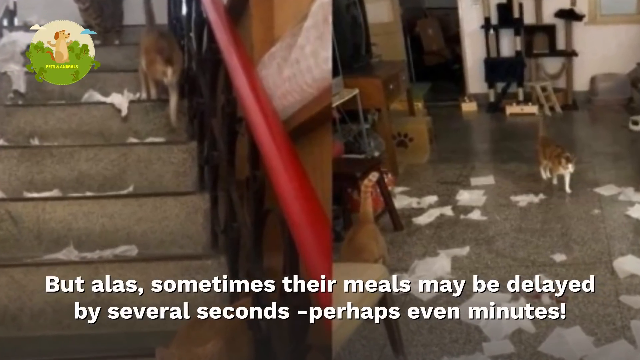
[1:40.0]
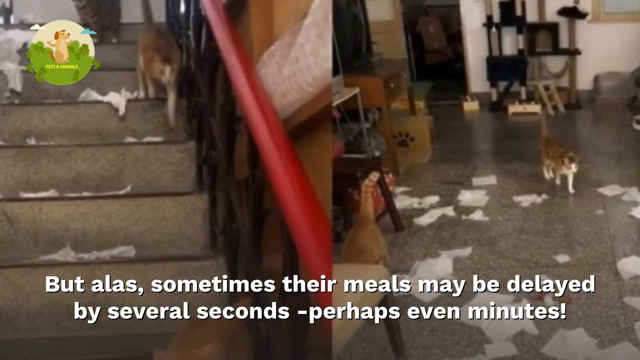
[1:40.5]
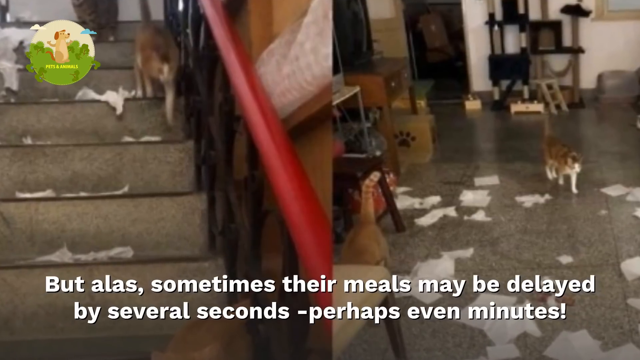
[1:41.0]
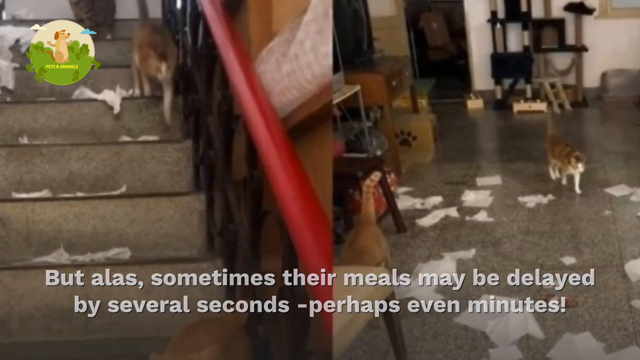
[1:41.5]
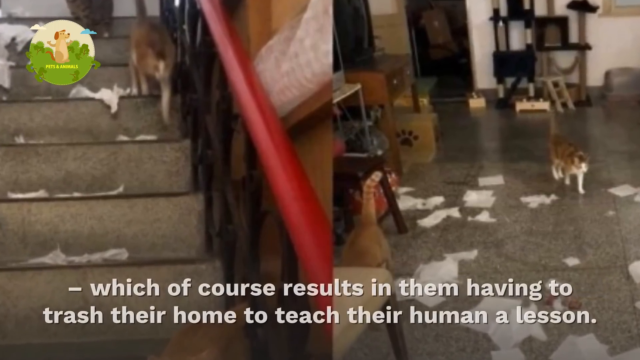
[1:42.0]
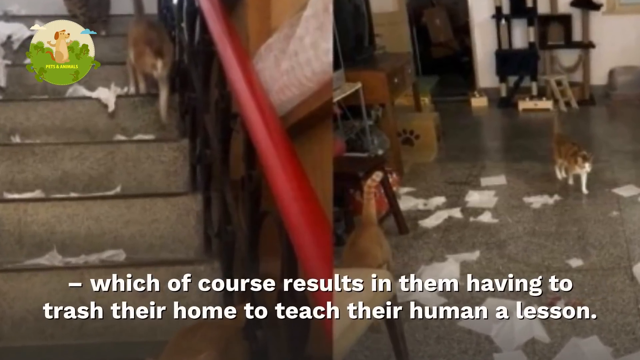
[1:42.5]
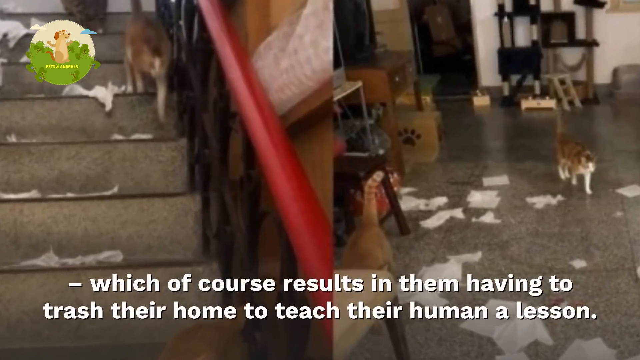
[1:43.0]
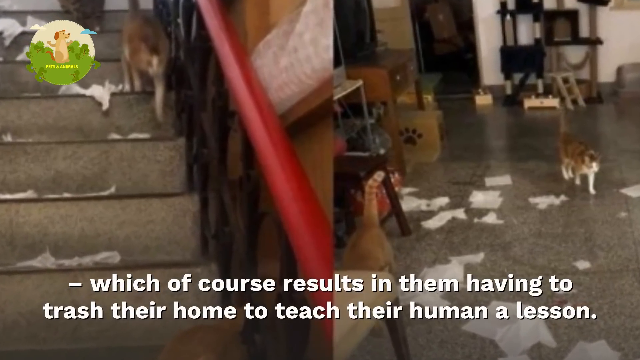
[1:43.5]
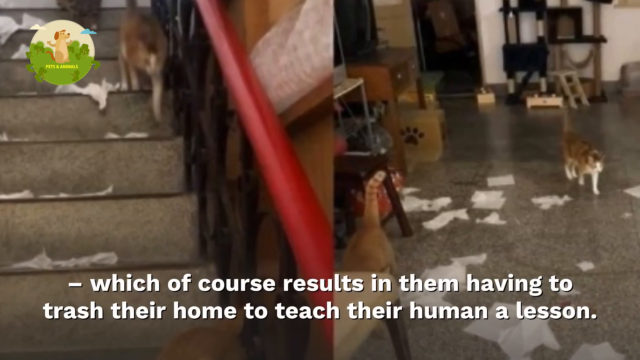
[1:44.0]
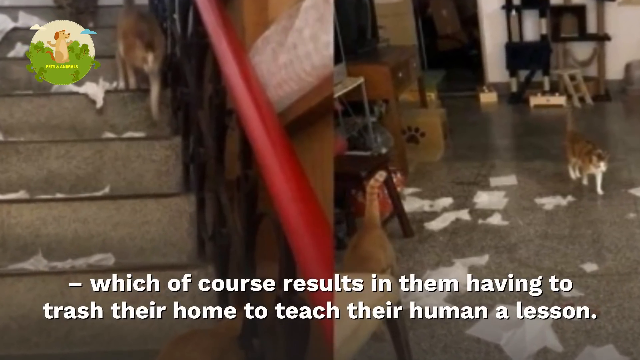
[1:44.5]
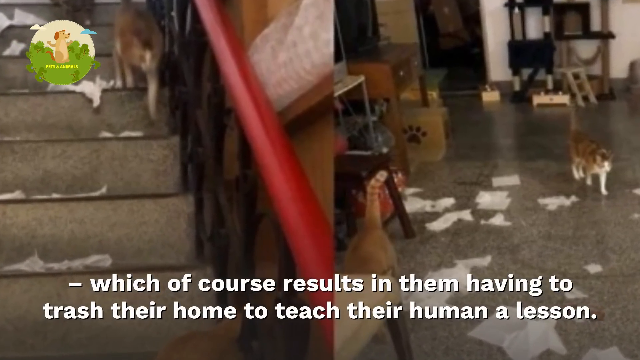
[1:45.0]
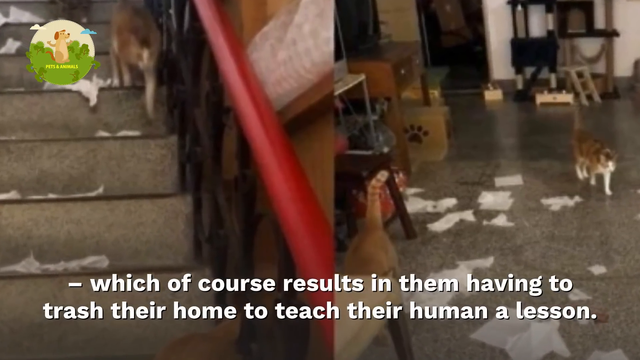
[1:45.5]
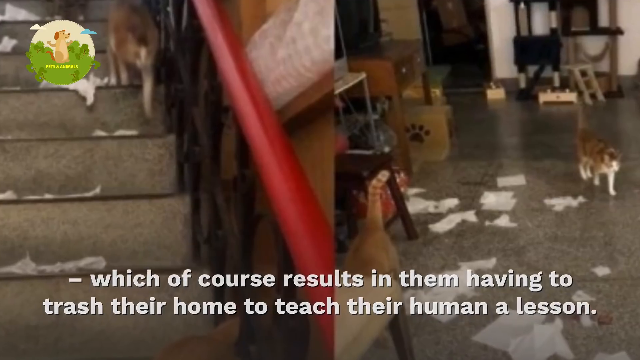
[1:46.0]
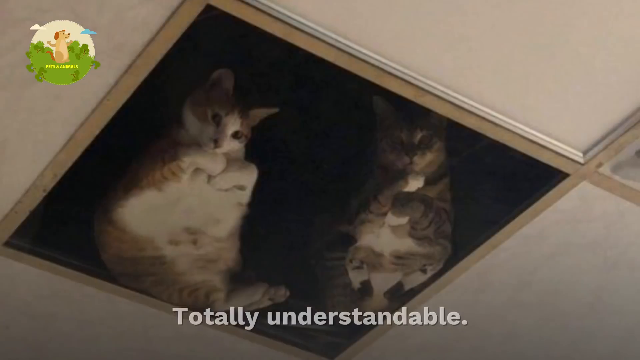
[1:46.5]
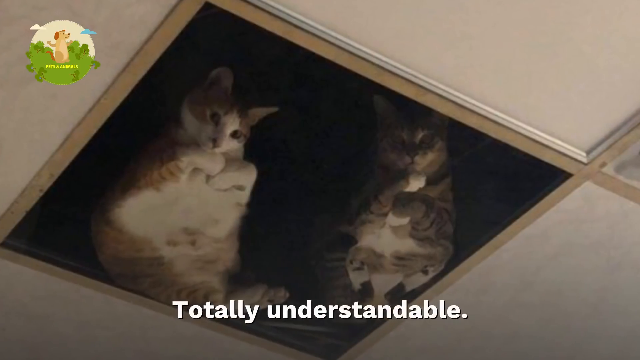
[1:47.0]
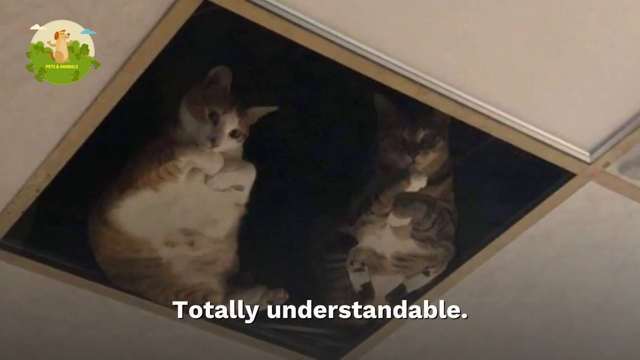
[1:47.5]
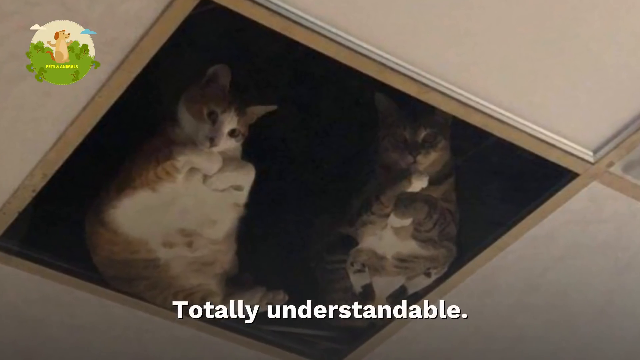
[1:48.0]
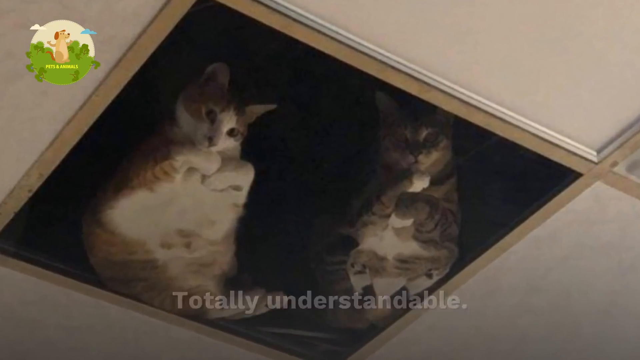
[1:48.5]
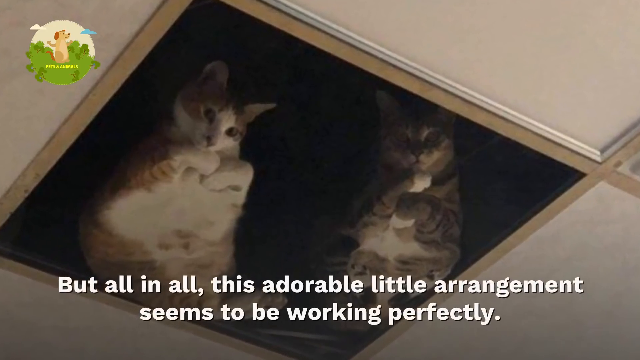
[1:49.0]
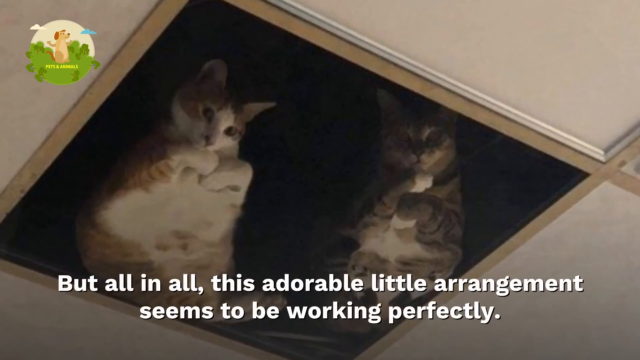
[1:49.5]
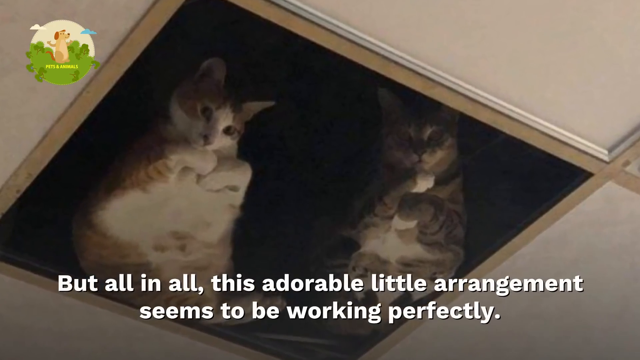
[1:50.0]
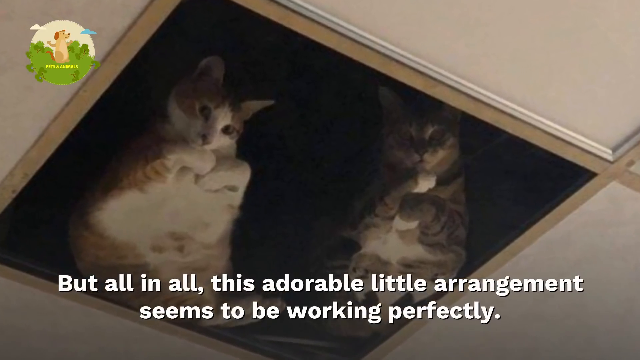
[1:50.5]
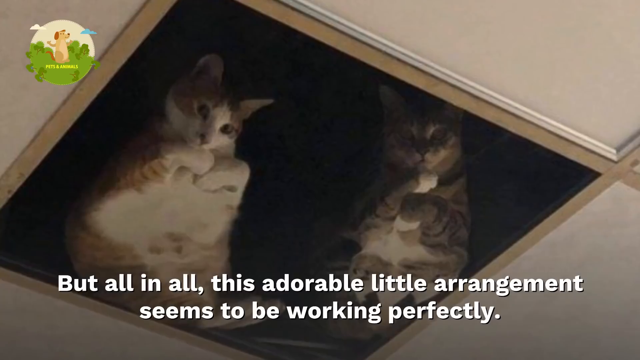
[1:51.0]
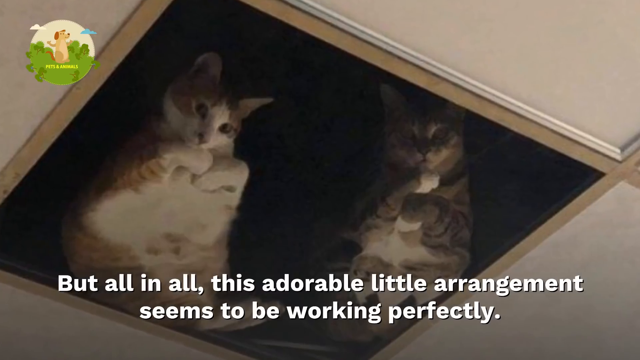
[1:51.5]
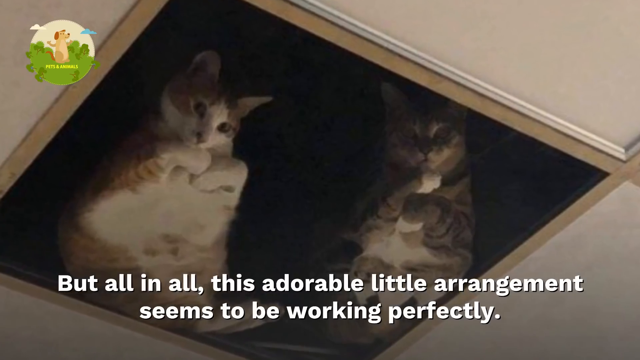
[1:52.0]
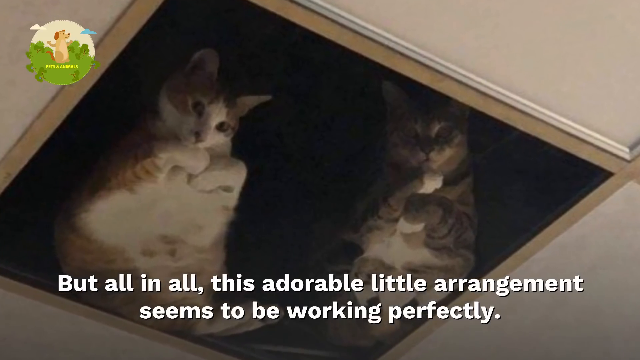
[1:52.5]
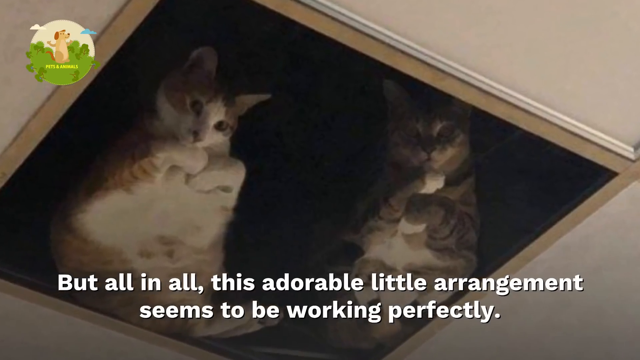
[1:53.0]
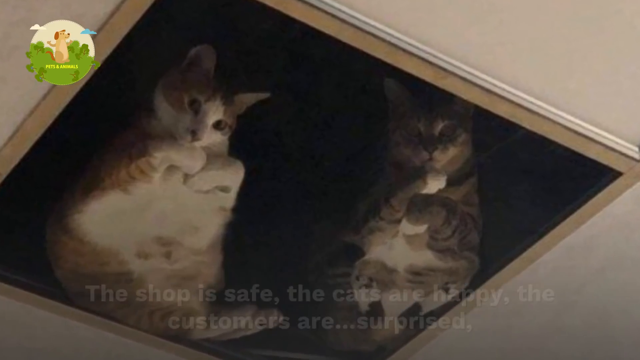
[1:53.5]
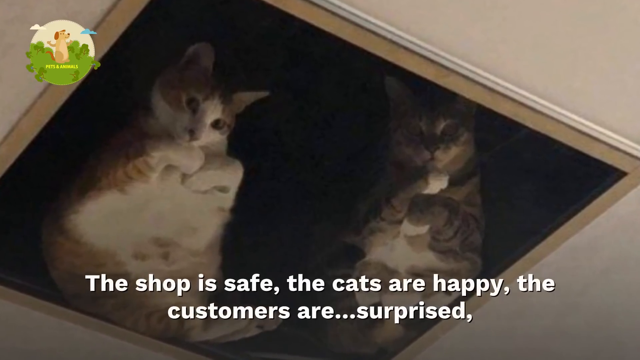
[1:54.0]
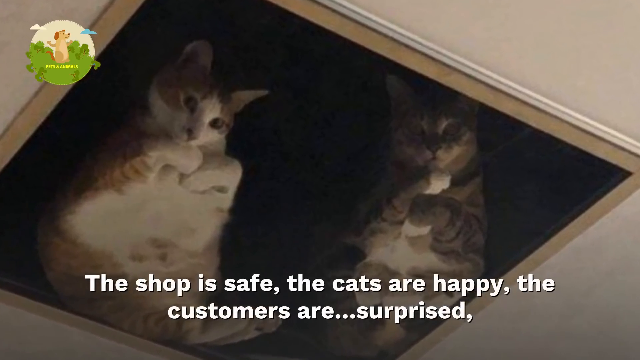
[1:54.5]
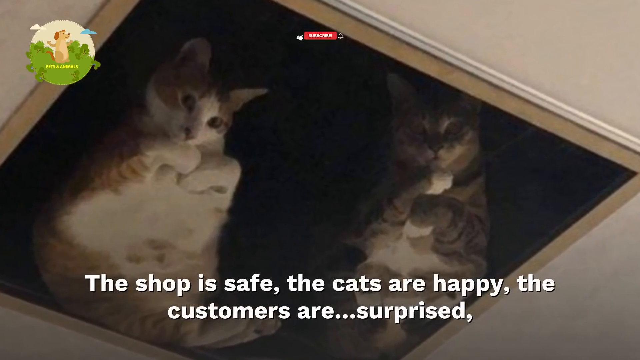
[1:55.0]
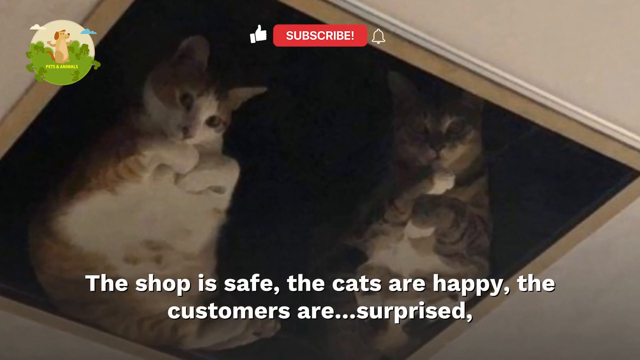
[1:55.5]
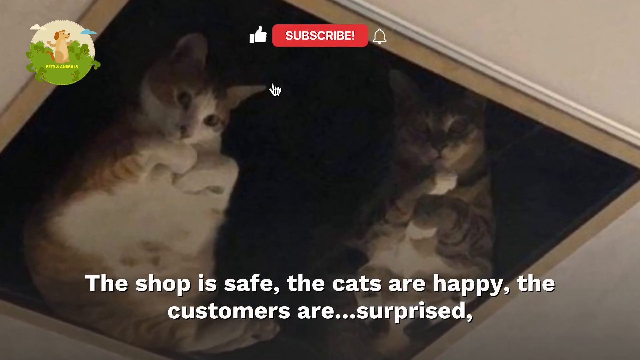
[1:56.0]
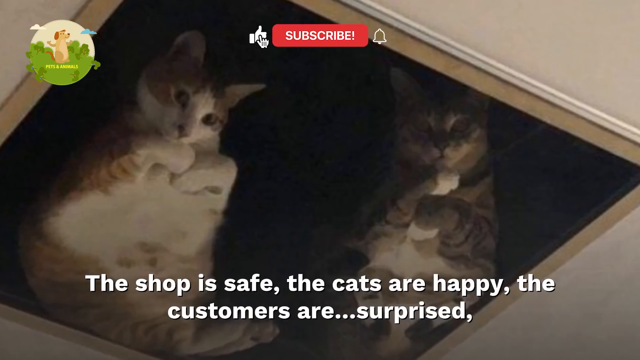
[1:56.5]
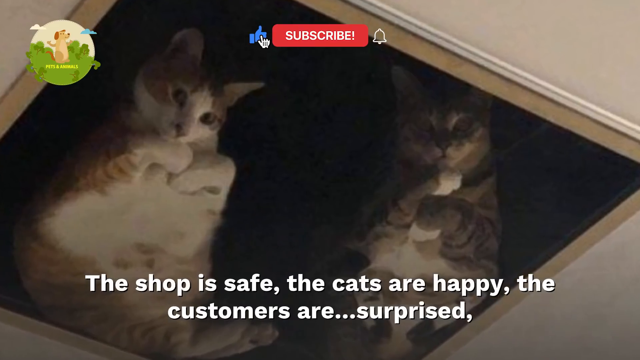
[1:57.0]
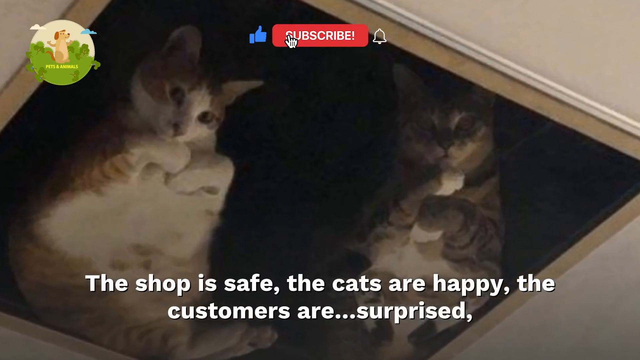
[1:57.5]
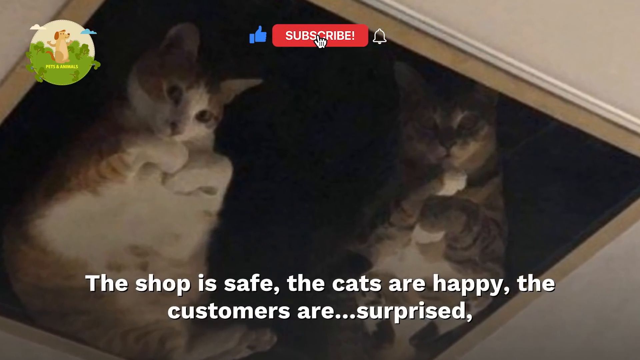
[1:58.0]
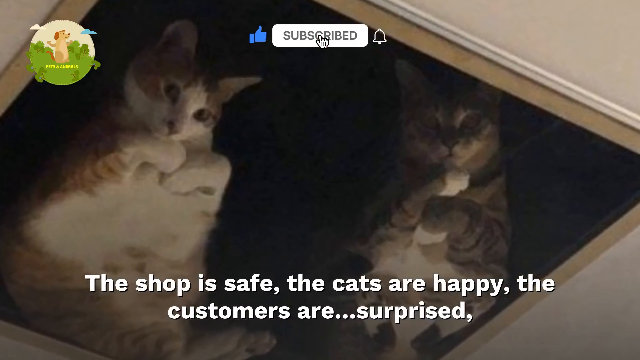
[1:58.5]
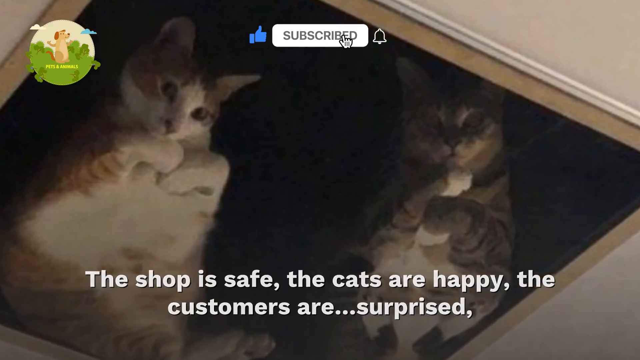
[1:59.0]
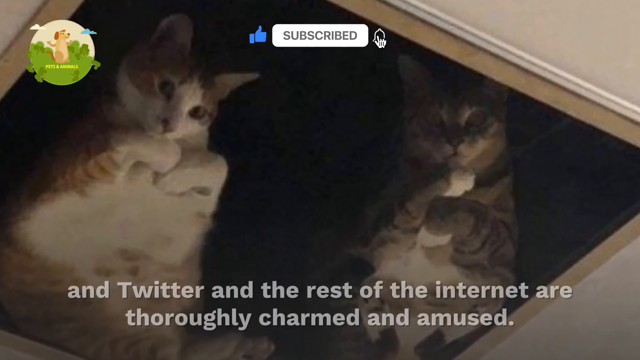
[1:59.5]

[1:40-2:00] Cats walk down some steps, and a couple of cats are in the room to the right. It looks like the cats have made quite a mess out of some paper, maybe spilled trash, with lots of white areas, papers and maybe Kleenexes lying in the area. Text on the picture says "but alas, sometimes their meals may be delayed by several seconds, perhaps even minutes," then "which of course results in them having to trash their home to teach their human a lesson. Totally understandable, but all in all, this adorable little arrangement seems to be working perfectly. The shop is safe, the cats are happy, the customers are surprised, and Twitter and the rest of the Internet are thoroughly charmed and amused." A red box that says "subscribe" pops up in the upper middle section; the cursor clicks it, and it becomes a white box that says "subscribed," with a little blue thumbs up for like.